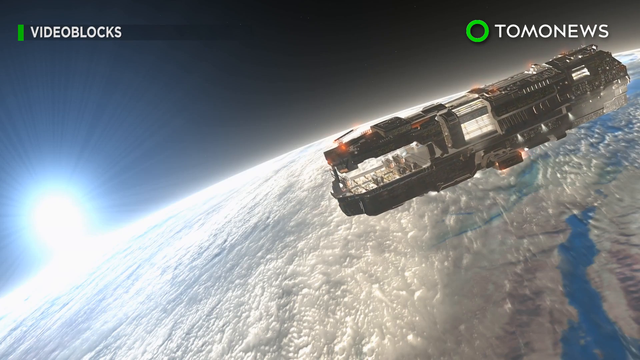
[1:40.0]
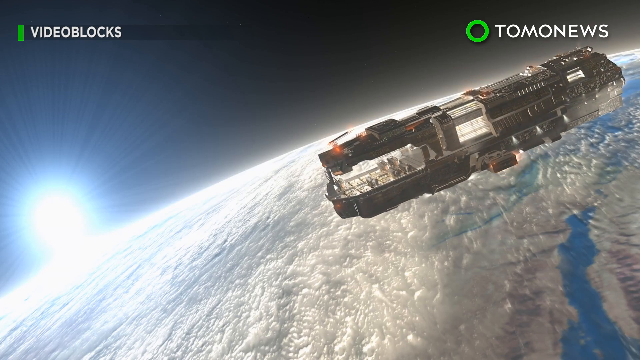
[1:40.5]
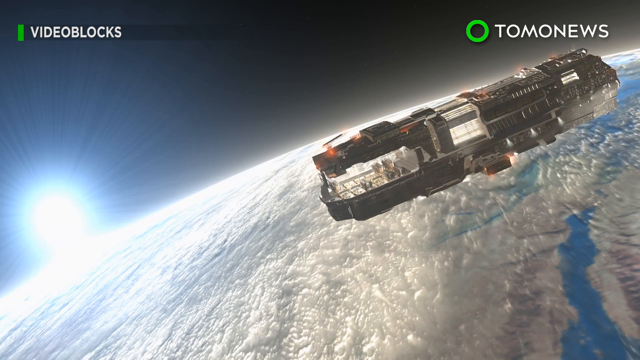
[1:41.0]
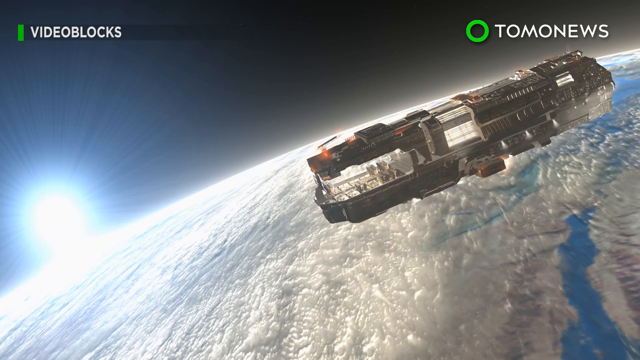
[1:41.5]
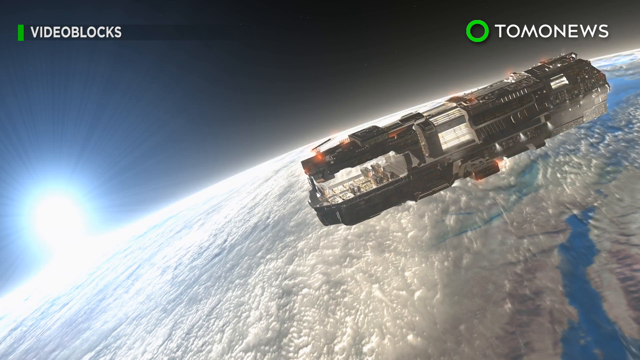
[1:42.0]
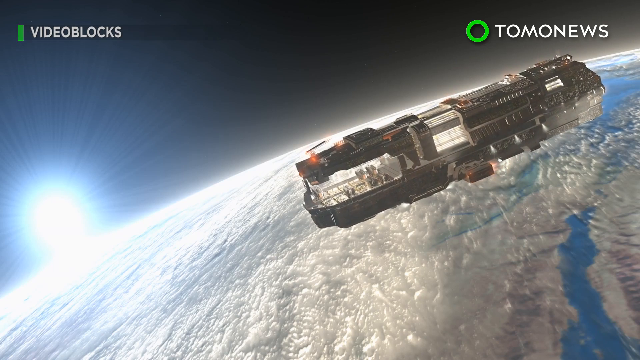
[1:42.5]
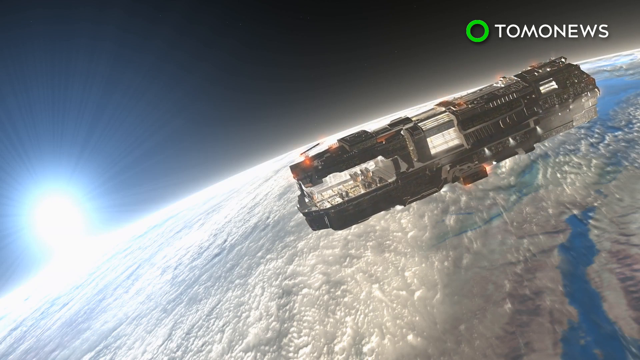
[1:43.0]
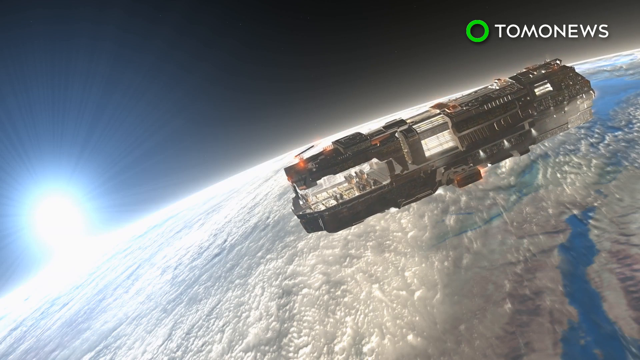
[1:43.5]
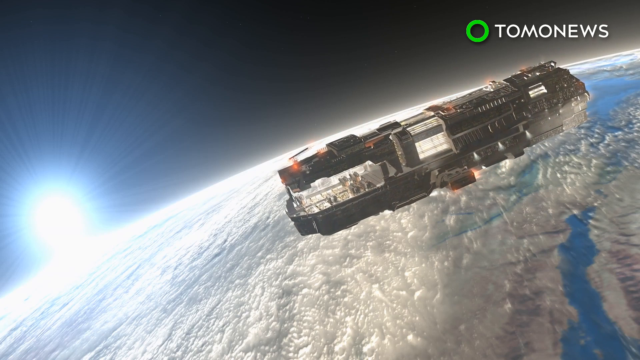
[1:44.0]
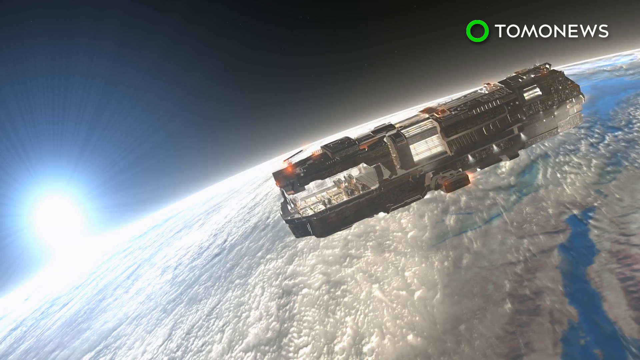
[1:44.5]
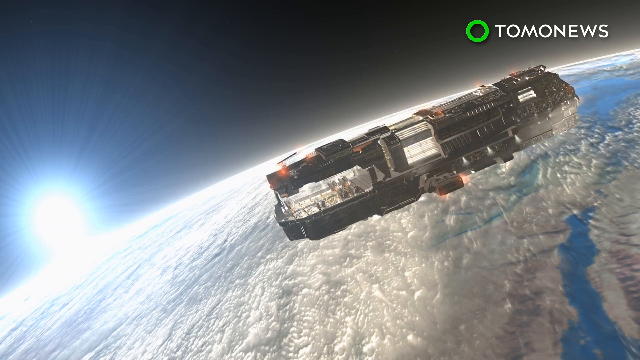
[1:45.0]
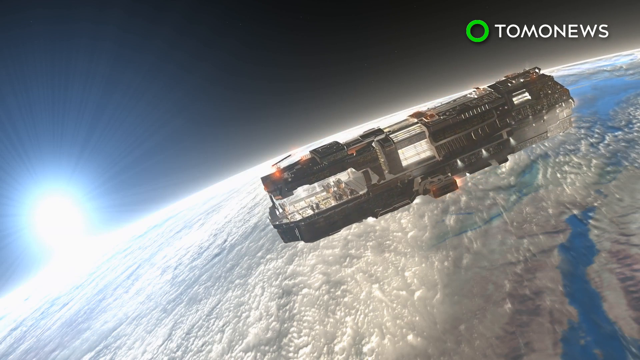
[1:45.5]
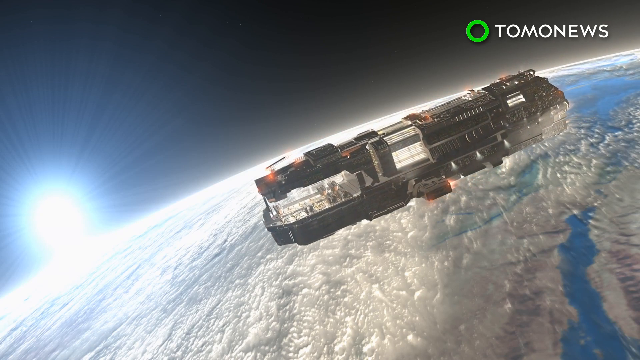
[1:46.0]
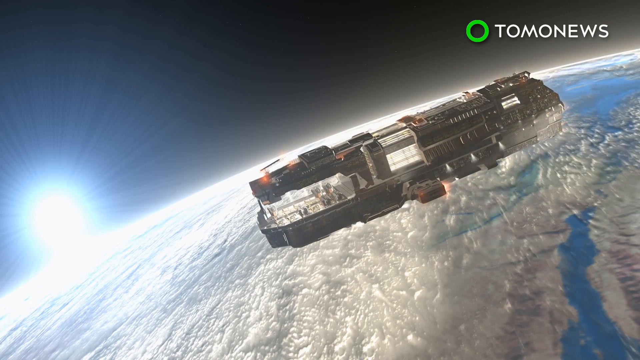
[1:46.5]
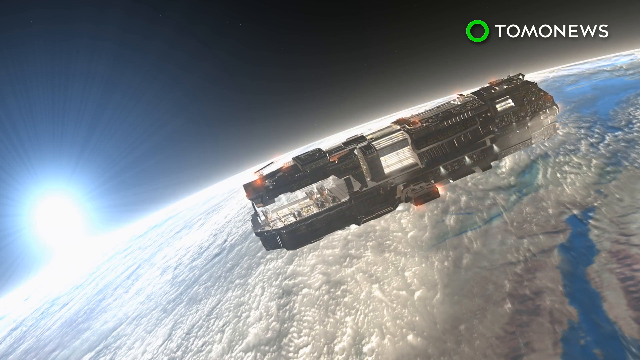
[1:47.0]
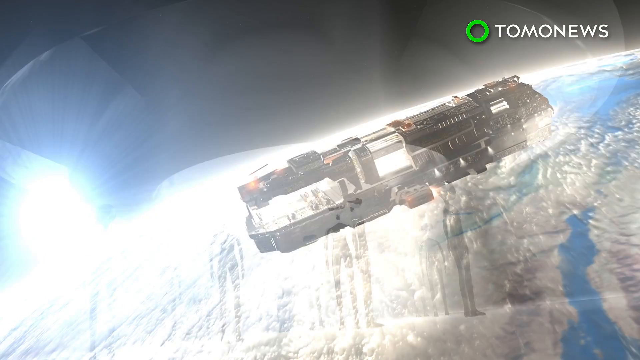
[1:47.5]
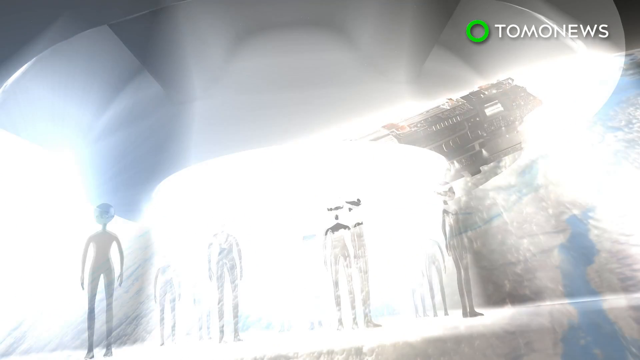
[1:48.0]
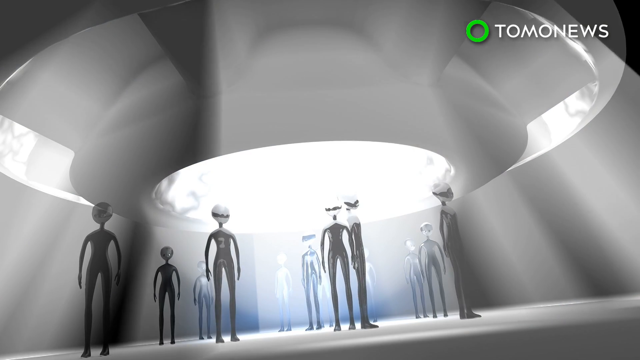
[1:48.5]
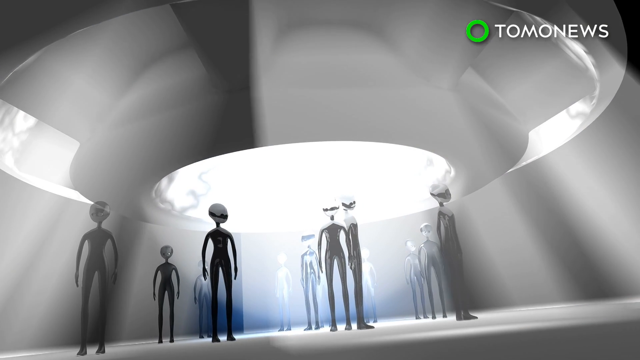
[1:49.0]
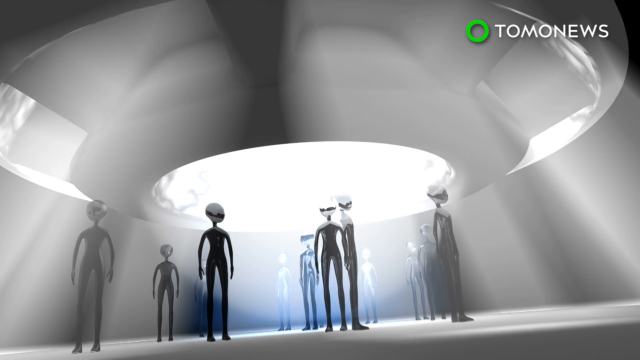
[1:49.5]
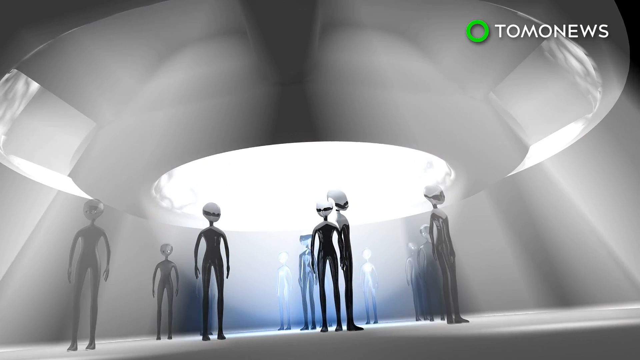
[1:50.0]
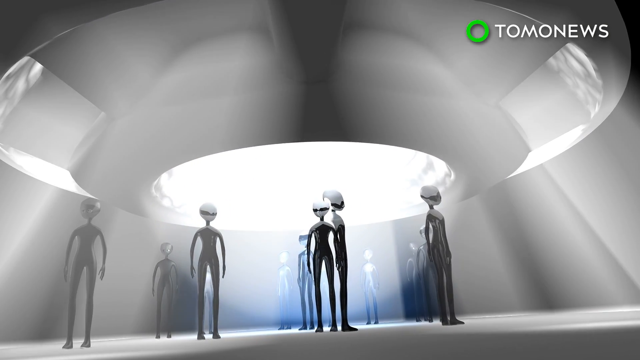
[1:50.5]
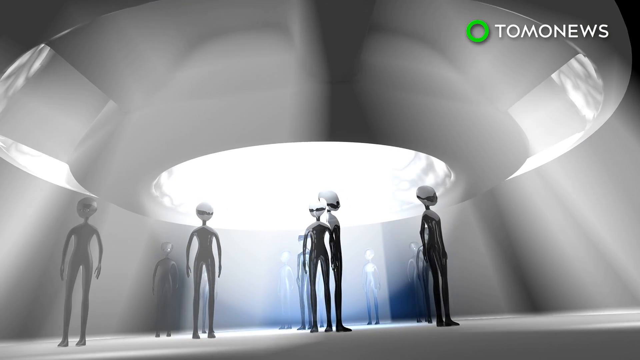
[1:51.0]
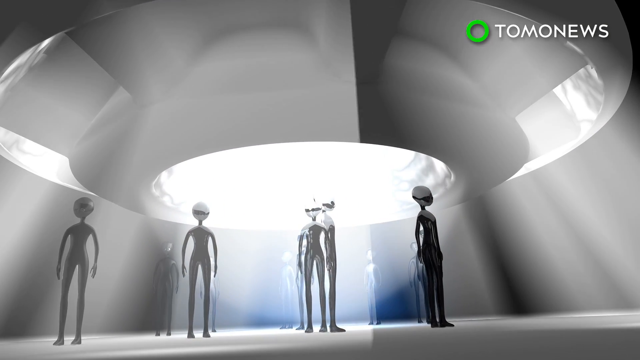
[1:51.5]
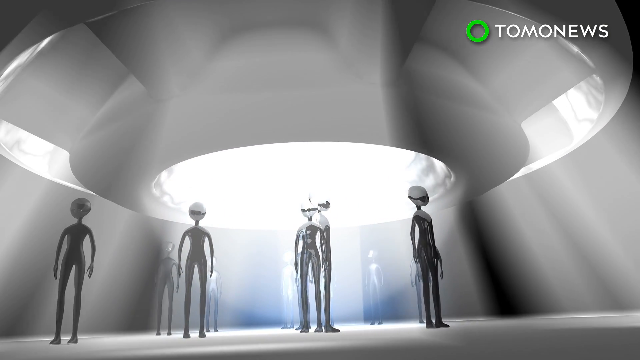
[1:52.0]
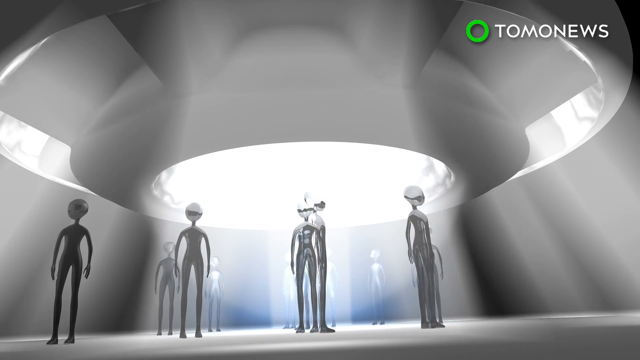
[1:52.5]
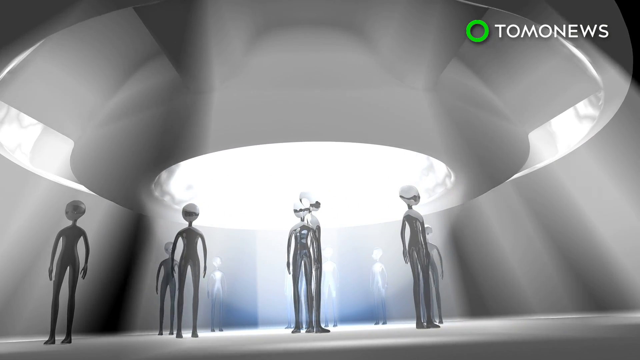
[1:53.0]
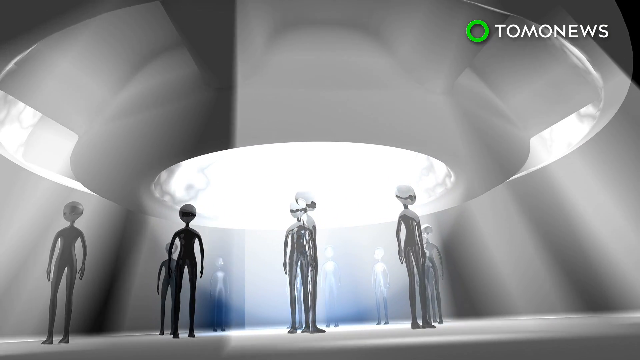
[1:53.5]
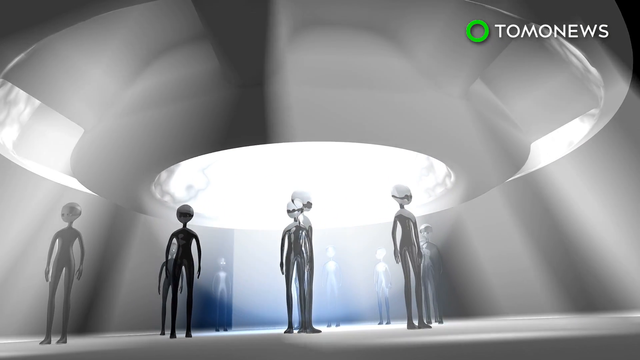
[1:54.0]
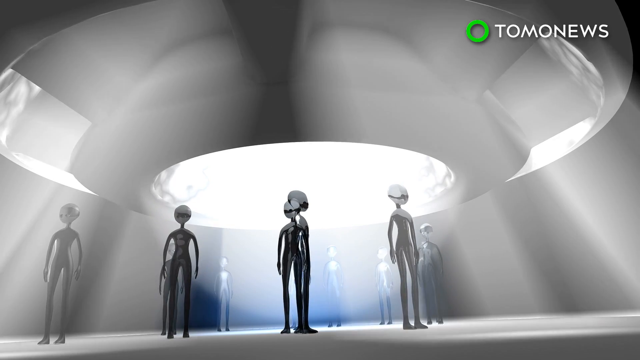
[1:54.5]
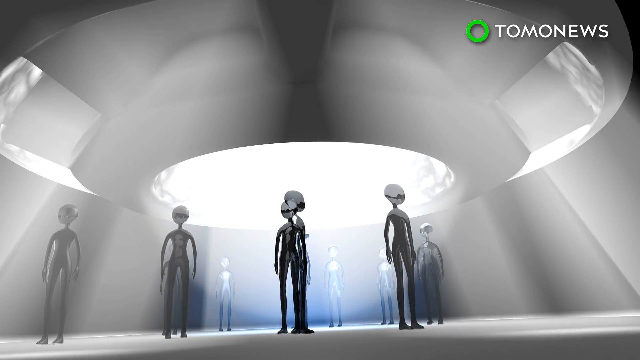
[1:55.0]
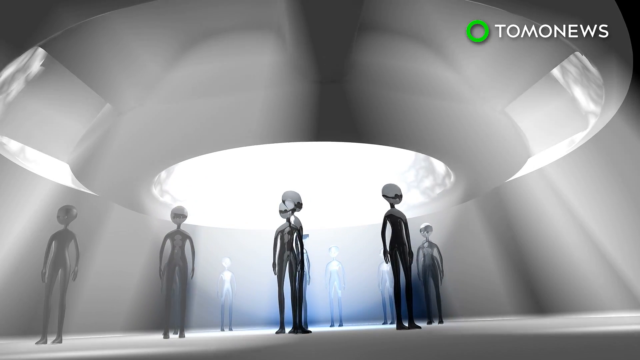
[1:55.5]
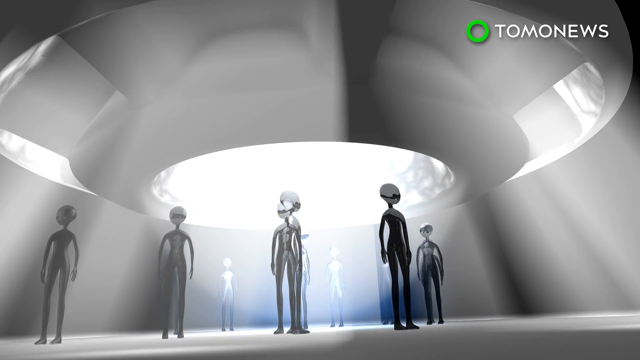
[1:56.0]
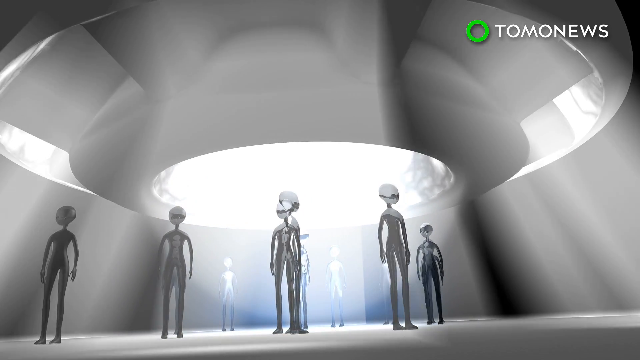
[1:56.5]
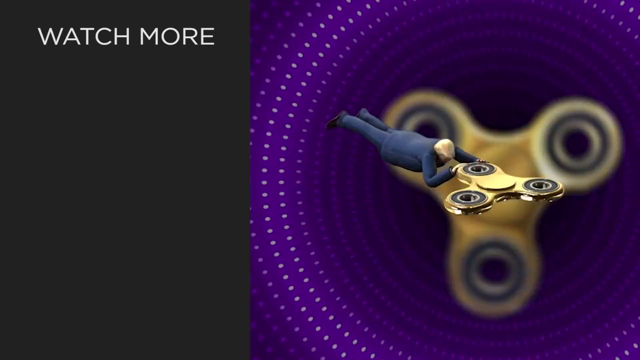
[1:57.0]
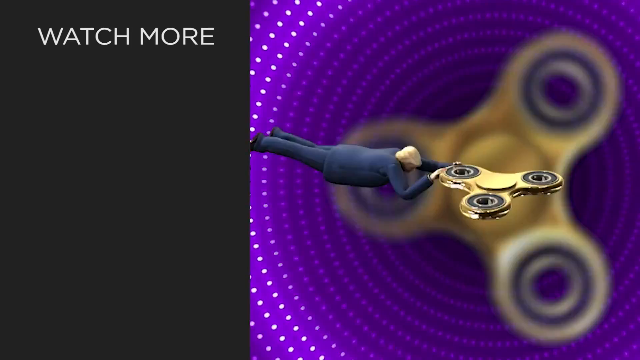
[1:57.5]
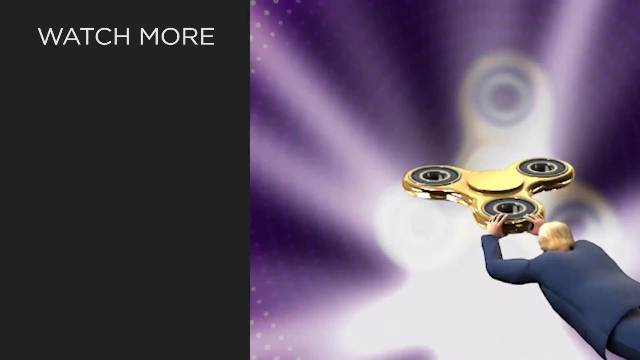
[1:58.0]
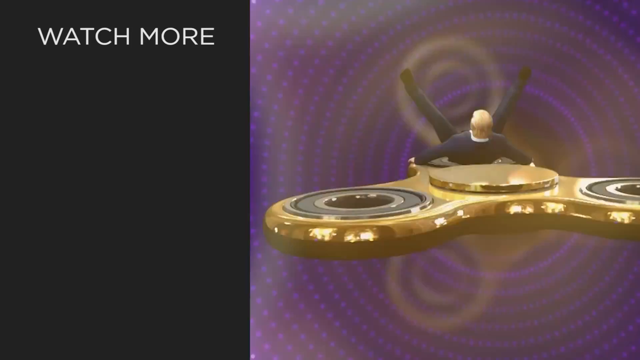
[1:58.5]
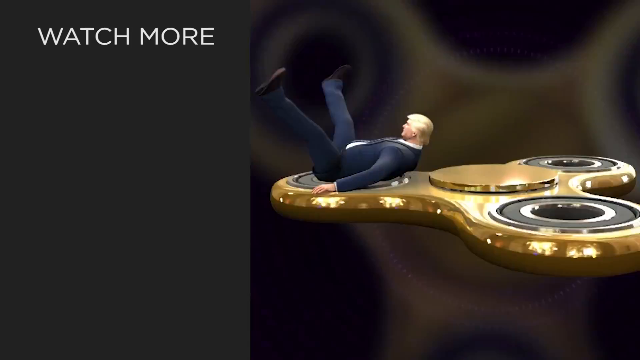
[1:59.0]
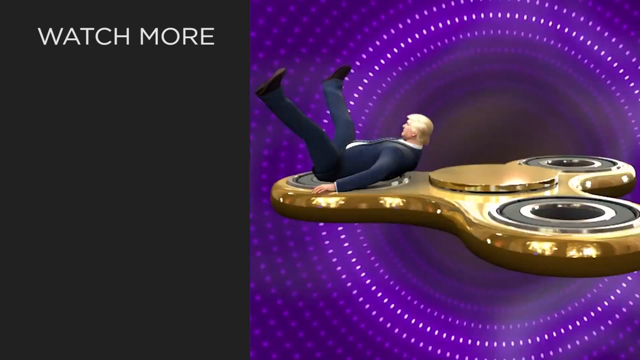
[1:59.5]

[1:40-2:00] The setting is out in space. On the right is what appears to be a train-like structure, kind of heading toward the left. In the background is the black sky and a very bright circle shape, potentially the sun. Below that is what appears to be Earth, with white clouds on it. The train-like structure slowly moves to the left, and a bunch of red glowing lights appear on it. The scene changes to what looks like the inside of a building, with a number of alien-like figures at the bottom of the building, apparently about 16 or so in total. They all wear the same outfits, like black suits or tops and bottoms, and they have white heads. Above, at the top middle, a large circular, sort of roof turns clockwise very slowly, with light beaming downward. The scene then changes to a man spinning on a gold fidget spinner that spins very rapidly, his legs up in the air as the spinner spins him.